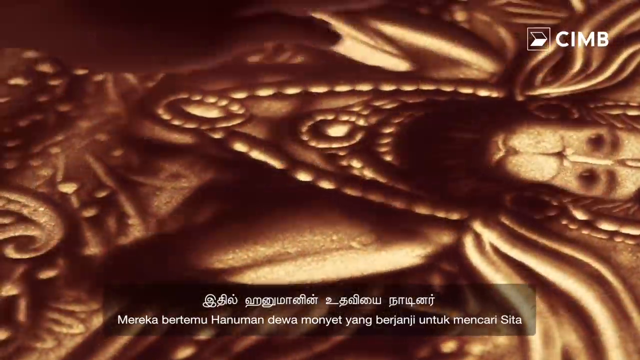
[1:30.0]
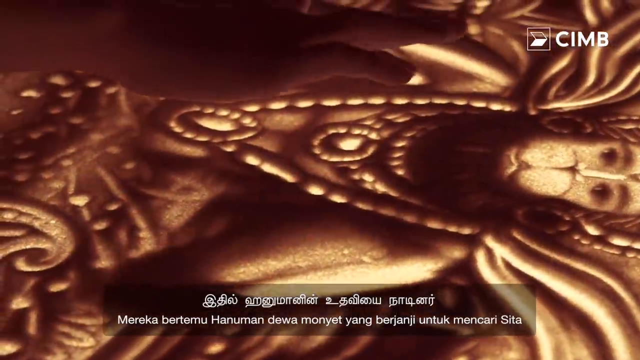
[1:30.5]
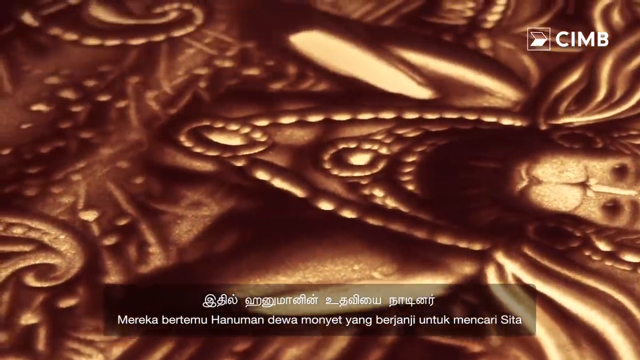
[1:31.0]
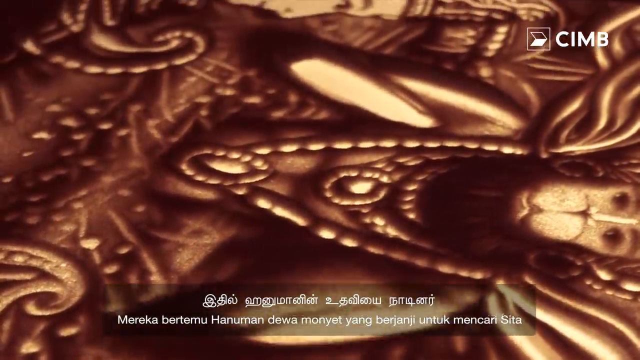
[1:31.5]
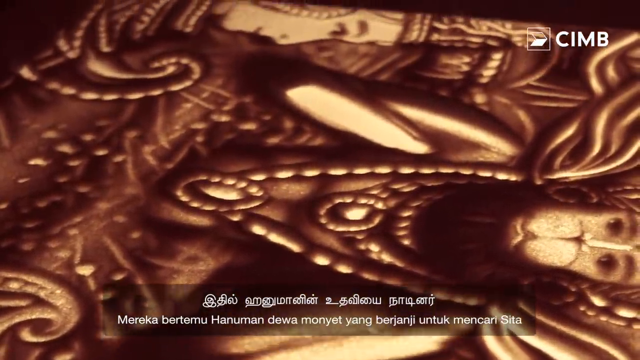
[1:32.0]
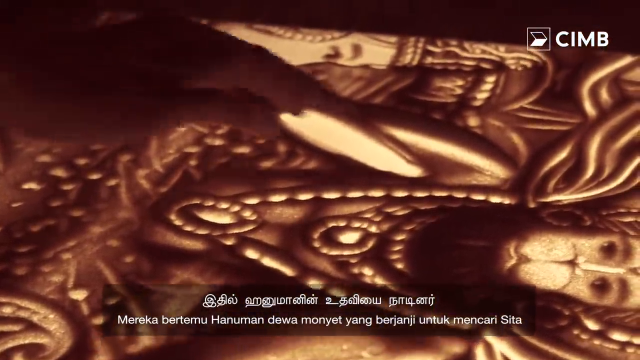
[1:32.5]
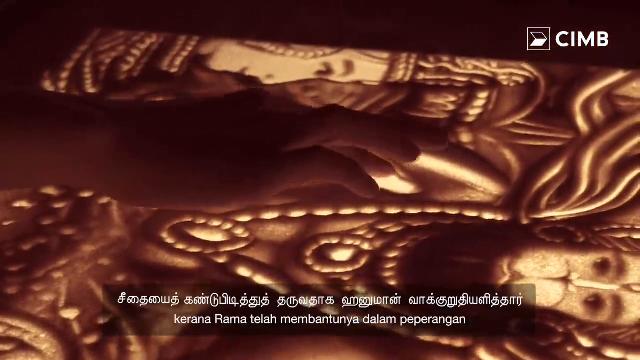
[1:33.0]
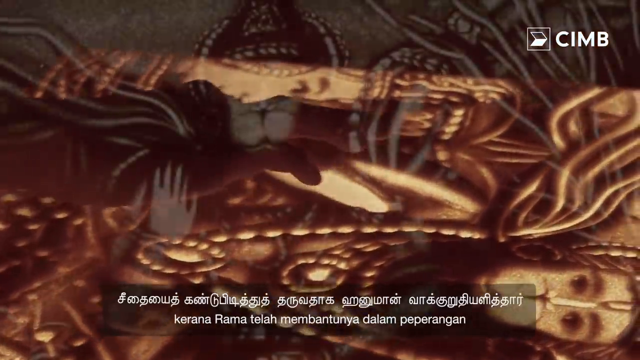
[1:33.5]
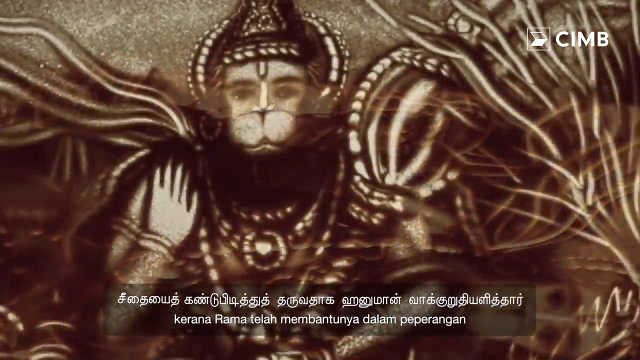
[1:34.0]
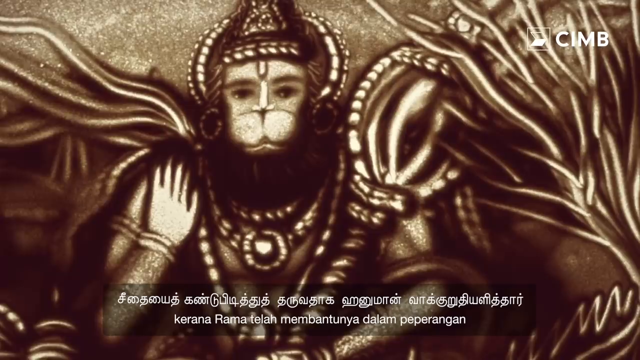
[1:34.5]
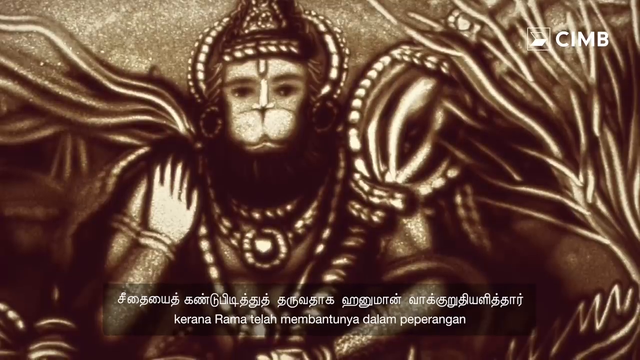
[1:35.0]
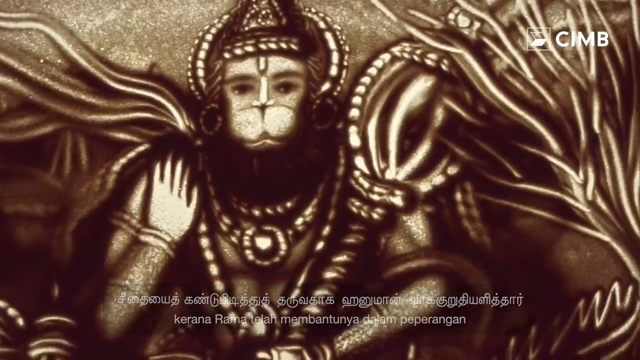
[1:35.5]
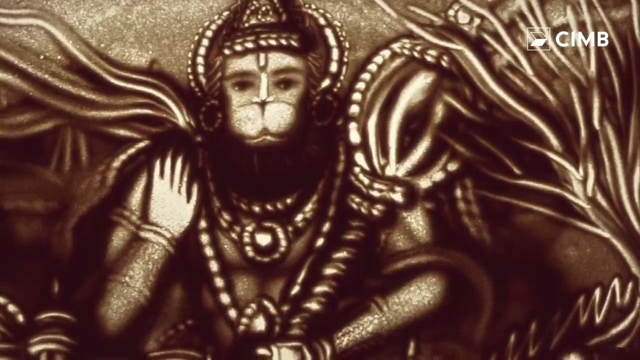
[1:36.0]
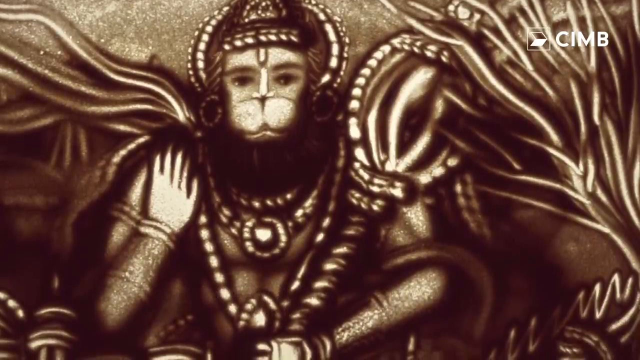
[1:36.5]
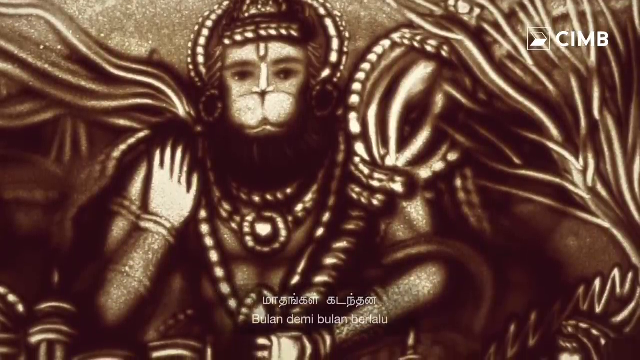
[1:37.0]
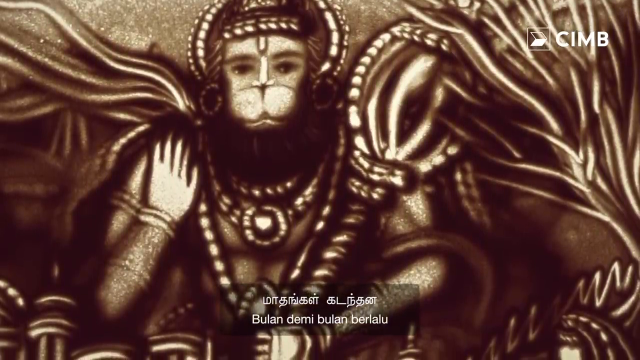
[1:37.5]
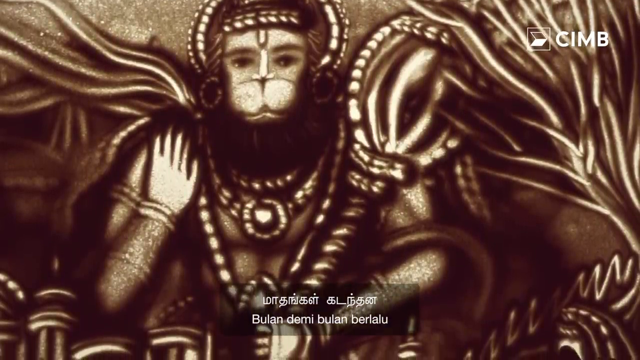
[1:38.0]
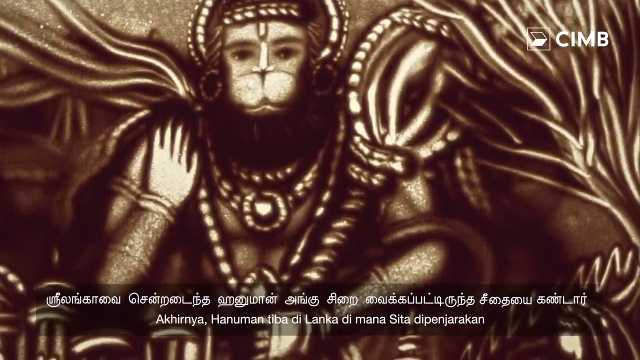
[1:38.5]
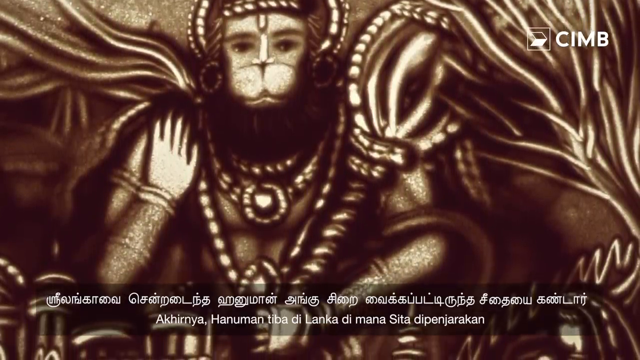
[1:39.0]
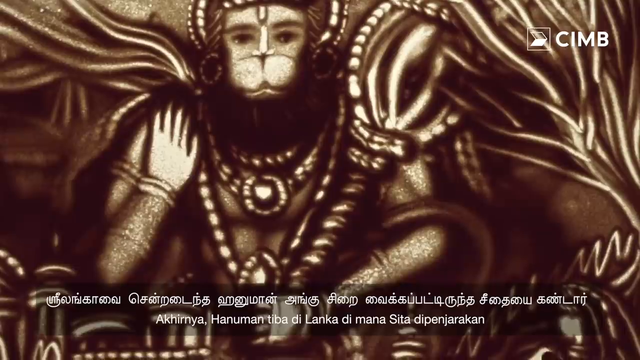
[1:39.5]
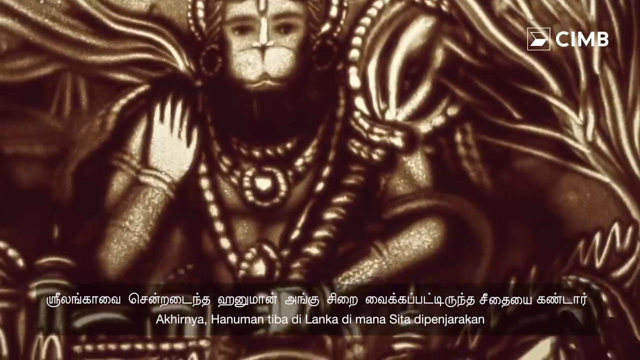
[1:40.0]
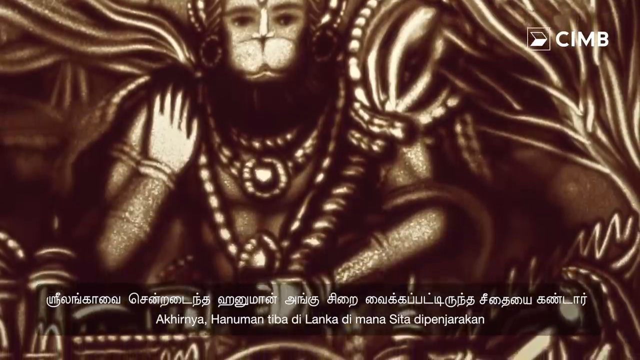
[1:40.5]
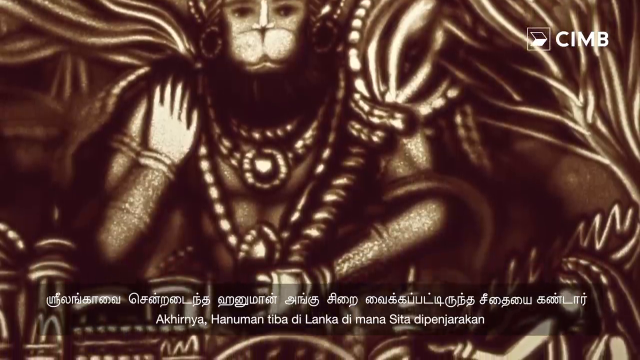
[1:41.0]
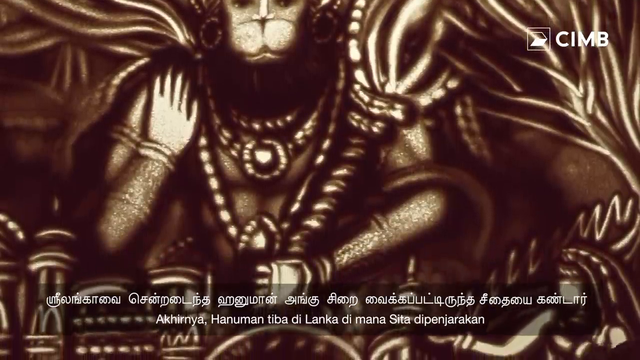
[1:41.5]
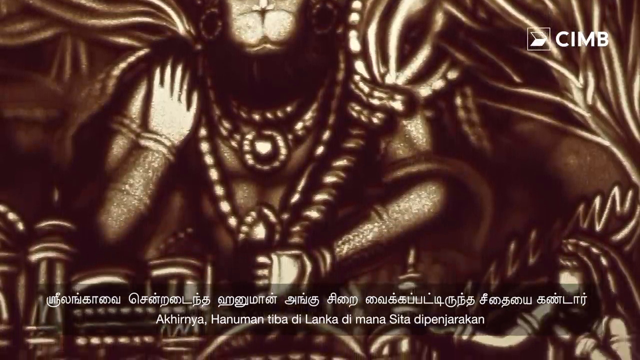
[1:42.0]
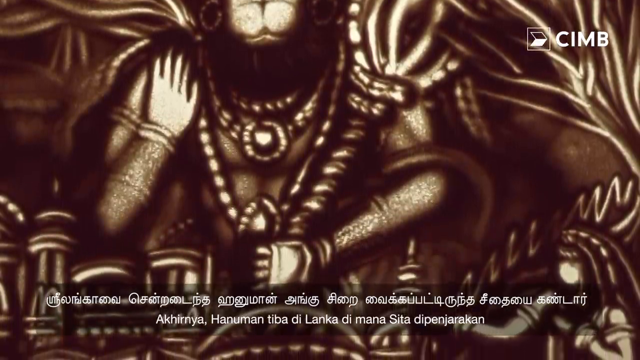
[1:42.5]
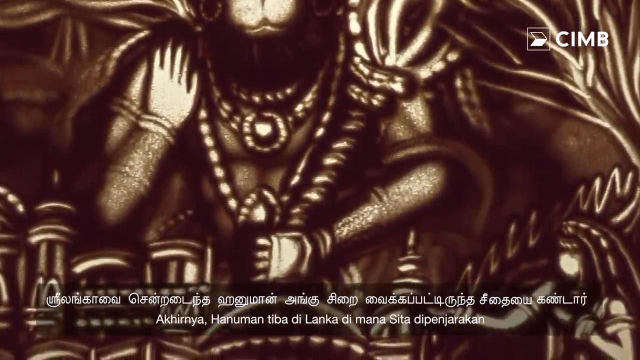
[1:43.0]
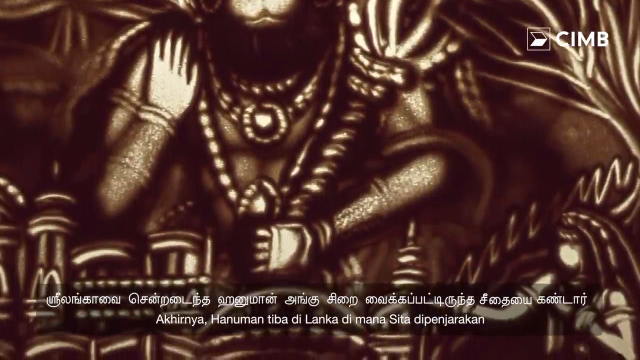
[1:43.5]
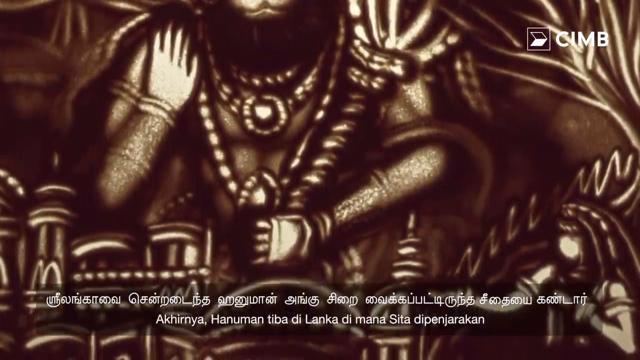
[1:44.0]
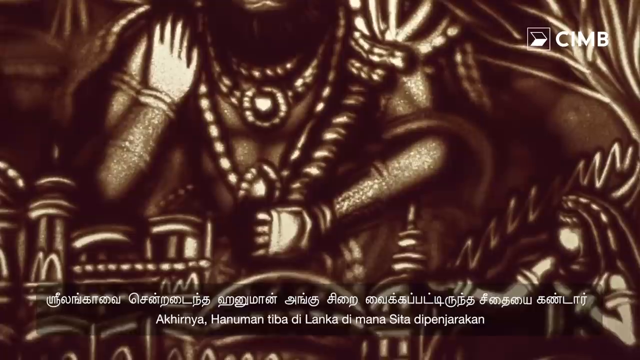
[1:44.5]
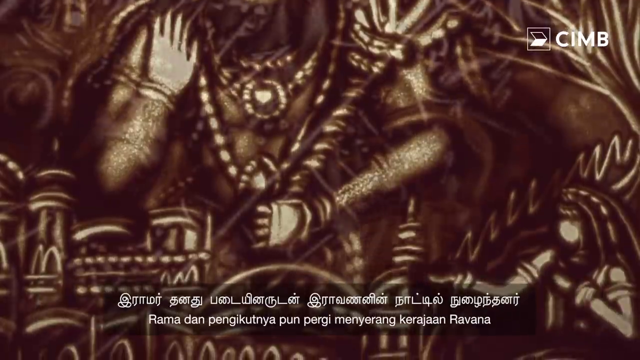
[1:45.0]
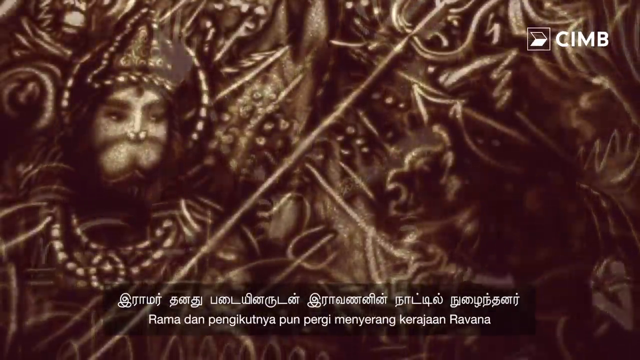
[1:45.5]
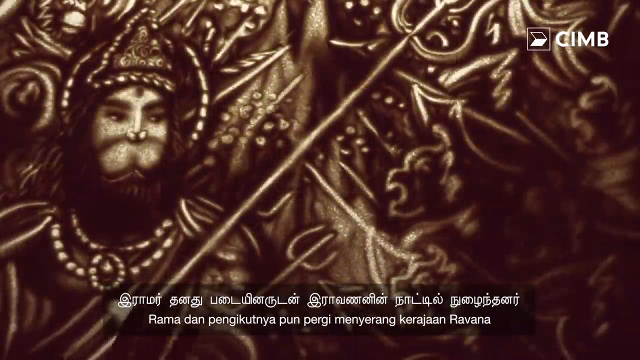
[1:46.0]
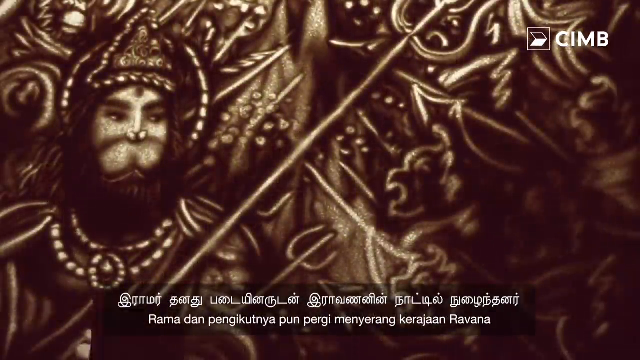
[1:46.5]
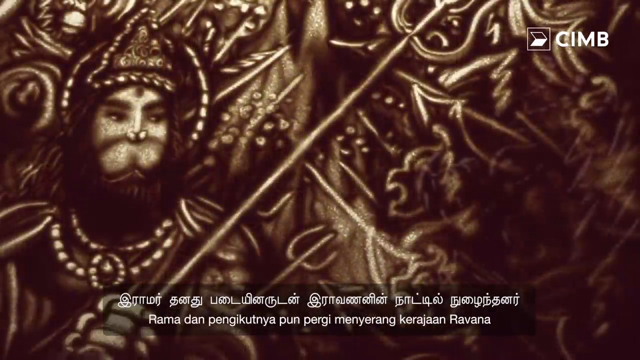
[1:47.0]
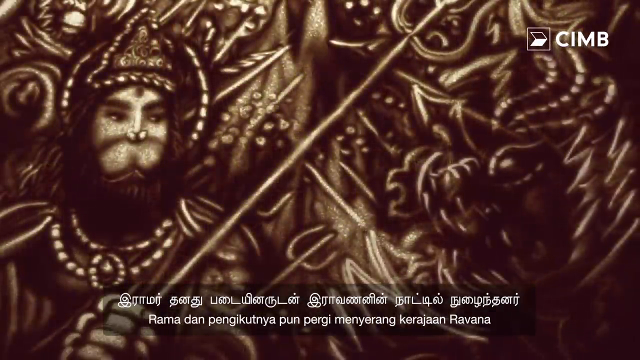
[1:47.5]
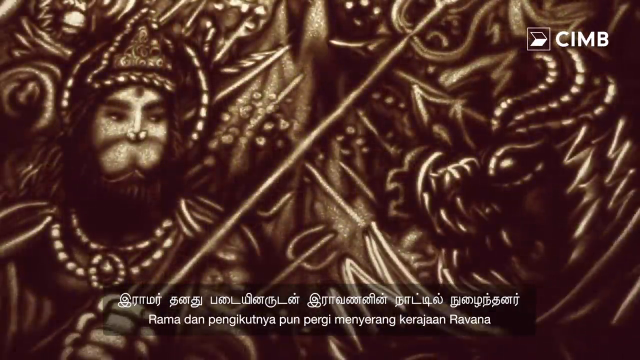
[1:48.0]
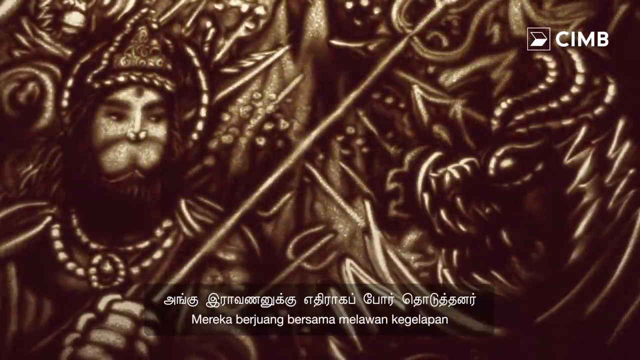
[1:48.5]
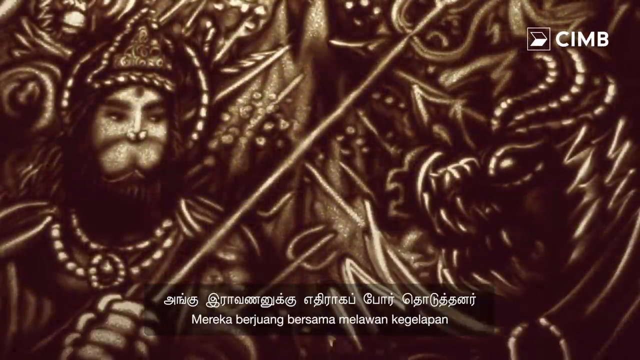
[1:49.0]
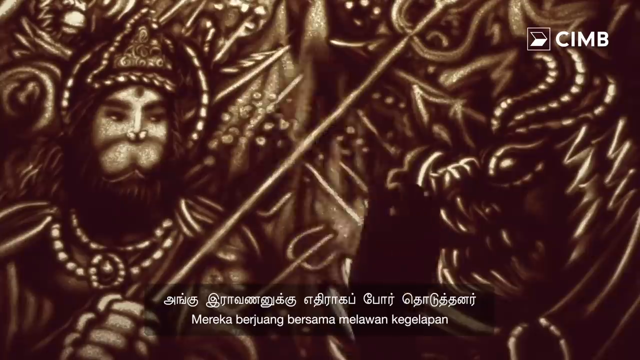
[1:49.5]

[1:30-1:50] A hand uses the surface of its index finger to spread some sand and create details on the artwork. Another royal-type figure appears; it is difficult to tell whether it is male or female from the facial features, but the figure wears a crown and holds some type of big item. The camera zooms from up to down on this image, and a hand again moves very quickly to create different details and patterns on the overall design. The figure has no mouth and almost looks like it has a cat-like face, with the odd cat-like features in the bottom half of the face, while the rest of the body is very human-like. Throughout the video, there is white captioning at the bottom of the screen in a different language.